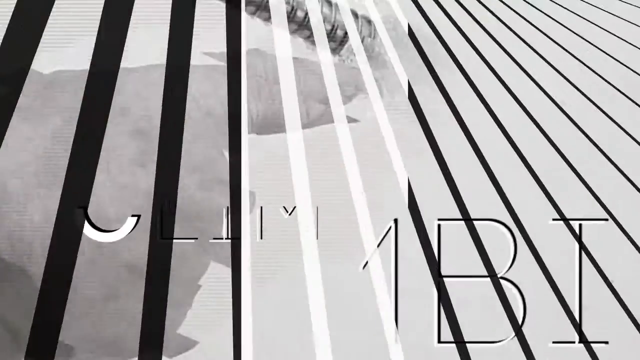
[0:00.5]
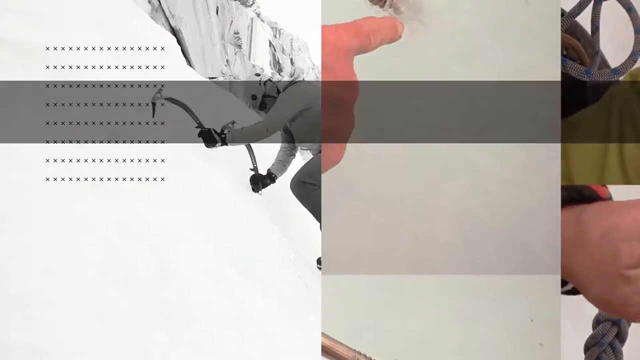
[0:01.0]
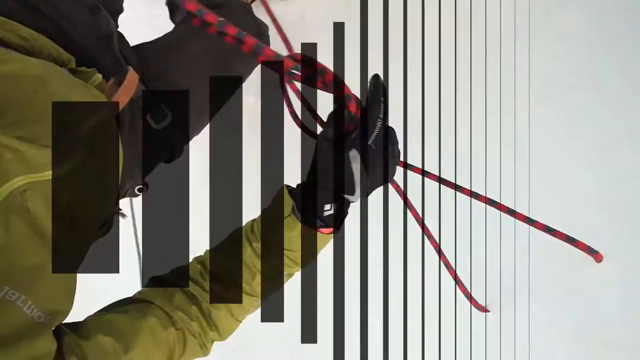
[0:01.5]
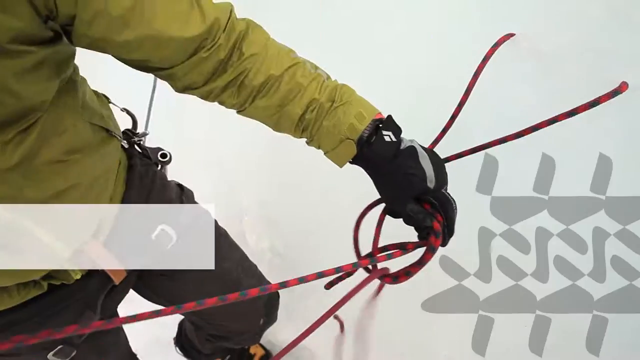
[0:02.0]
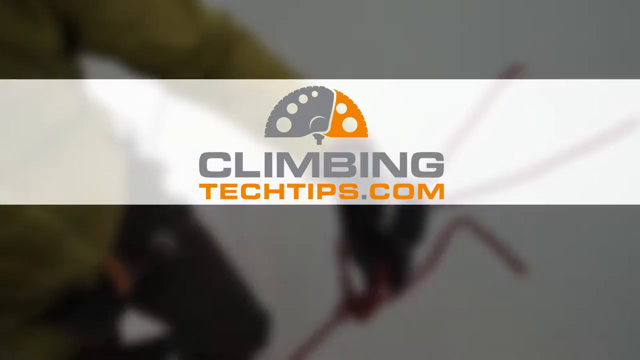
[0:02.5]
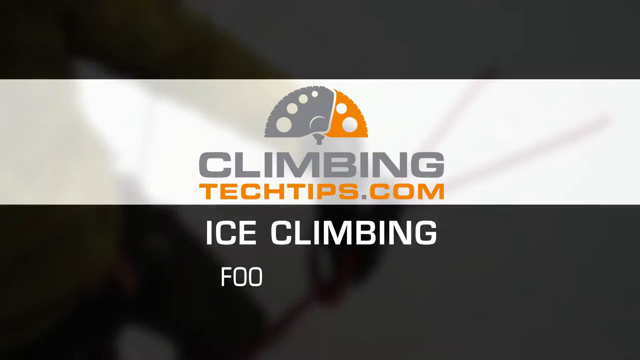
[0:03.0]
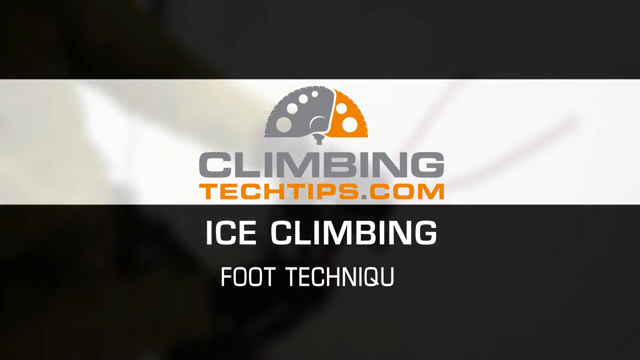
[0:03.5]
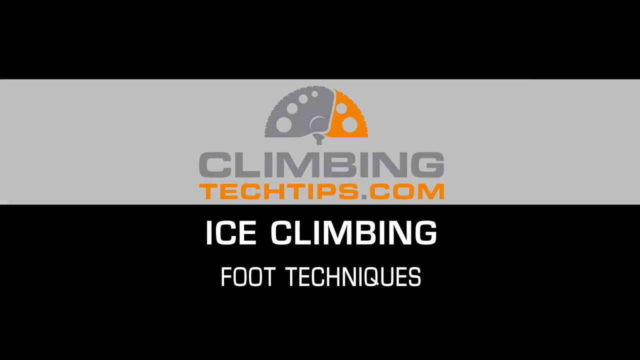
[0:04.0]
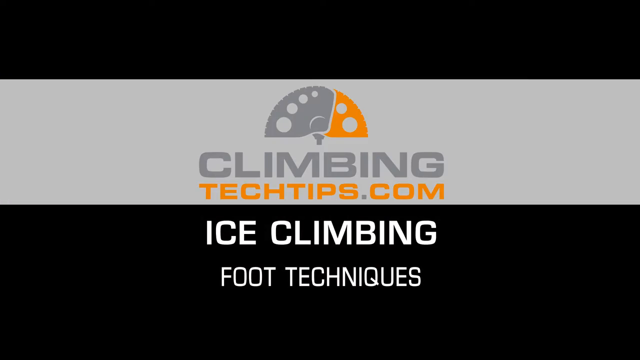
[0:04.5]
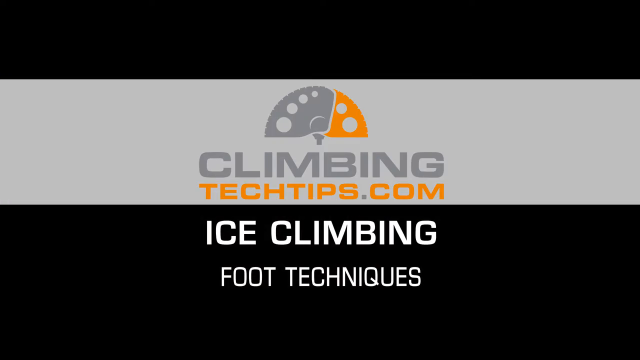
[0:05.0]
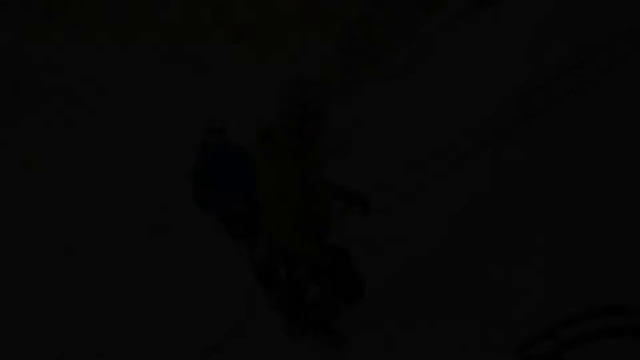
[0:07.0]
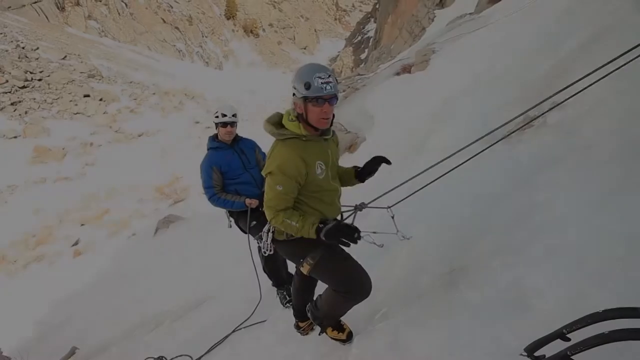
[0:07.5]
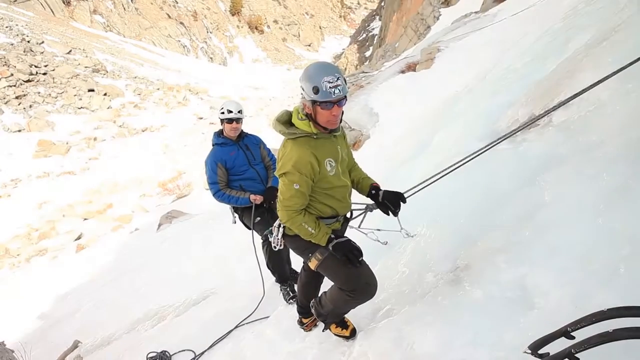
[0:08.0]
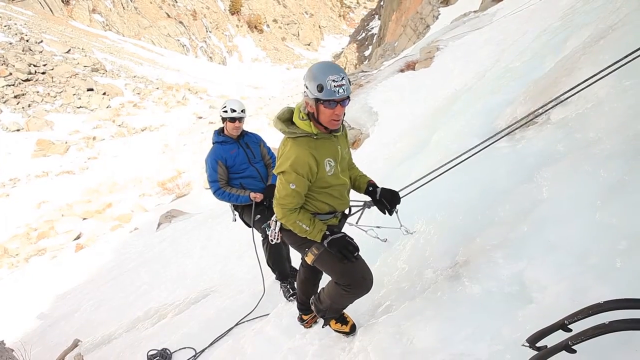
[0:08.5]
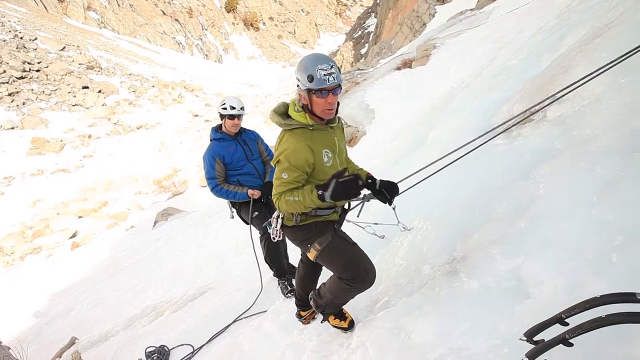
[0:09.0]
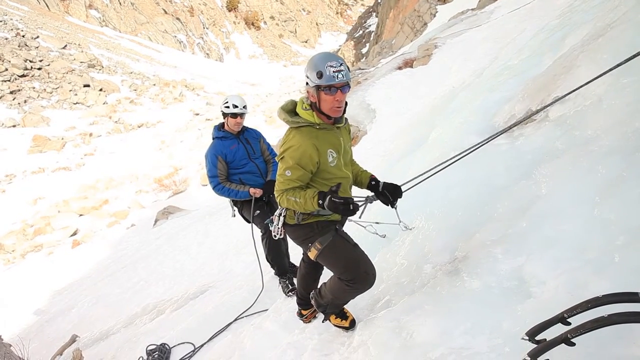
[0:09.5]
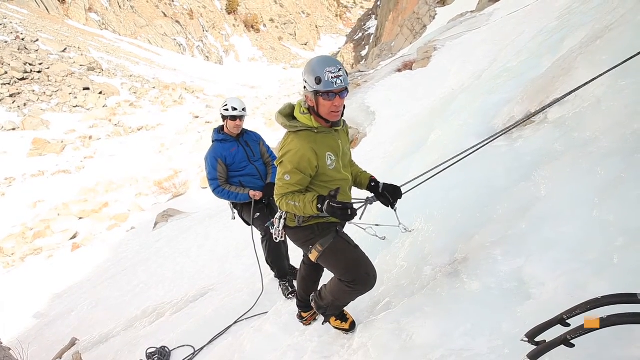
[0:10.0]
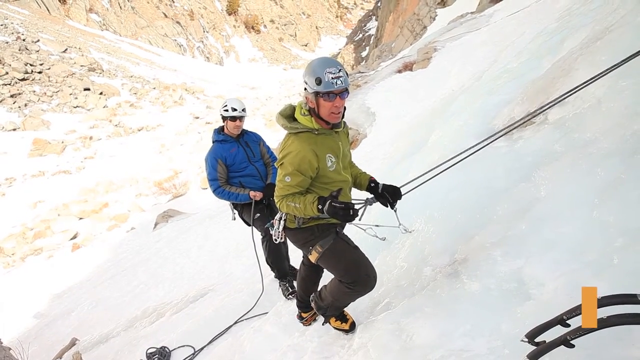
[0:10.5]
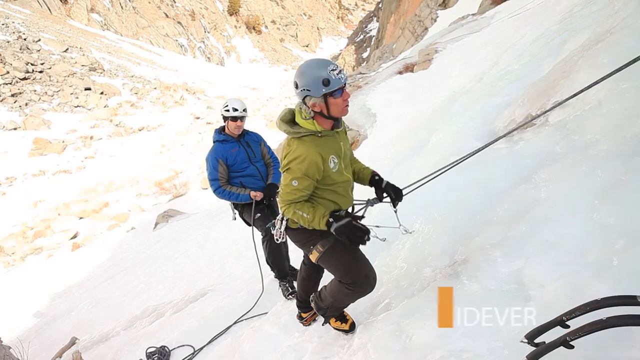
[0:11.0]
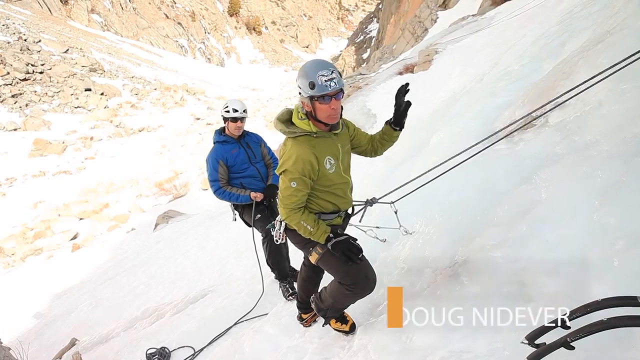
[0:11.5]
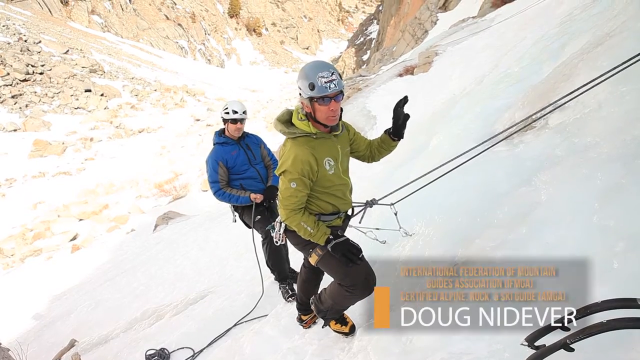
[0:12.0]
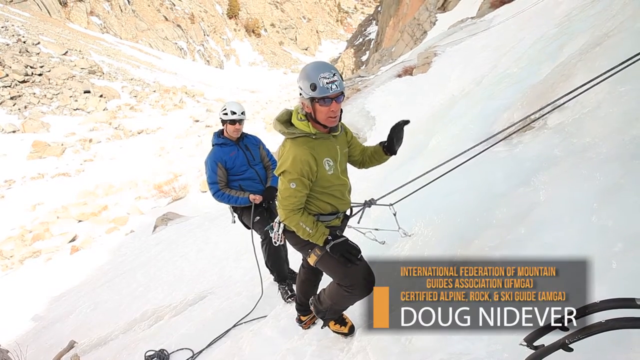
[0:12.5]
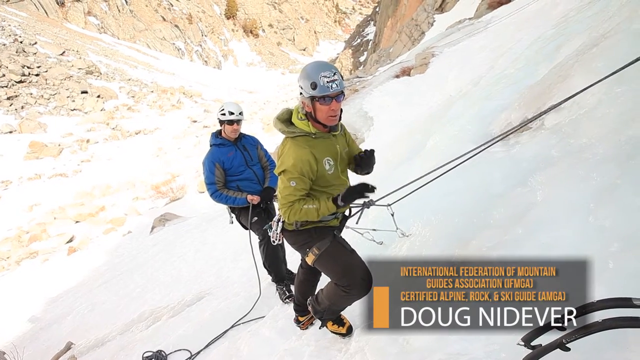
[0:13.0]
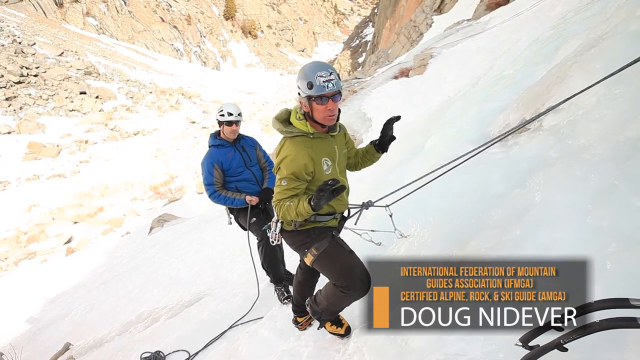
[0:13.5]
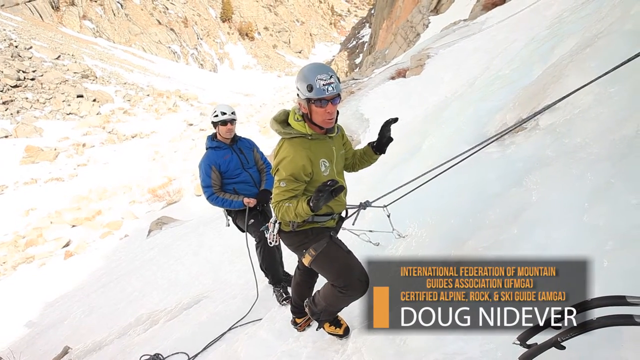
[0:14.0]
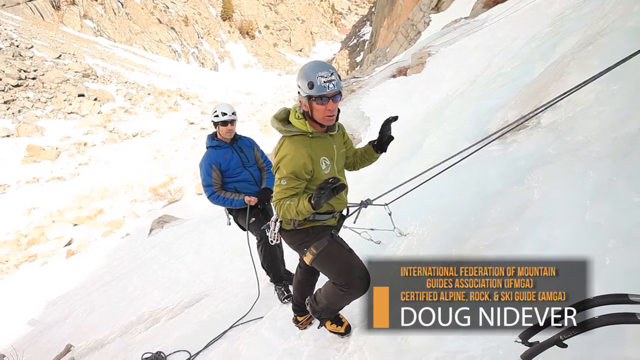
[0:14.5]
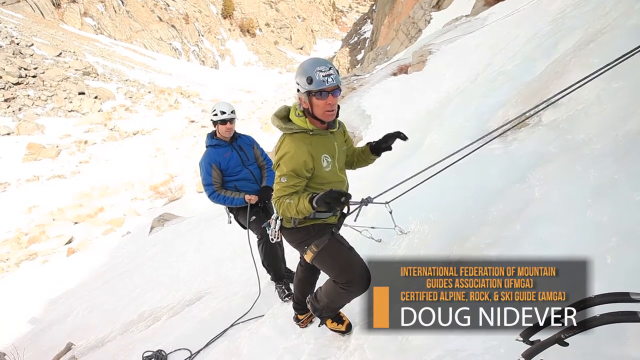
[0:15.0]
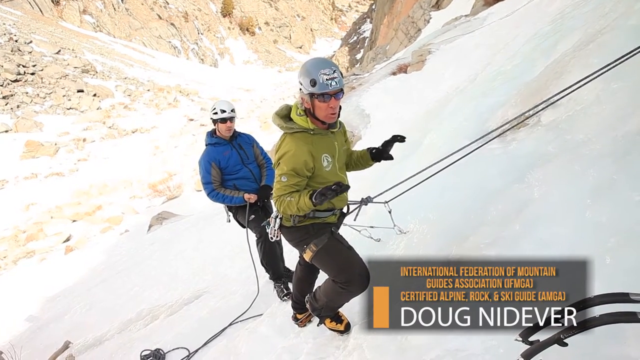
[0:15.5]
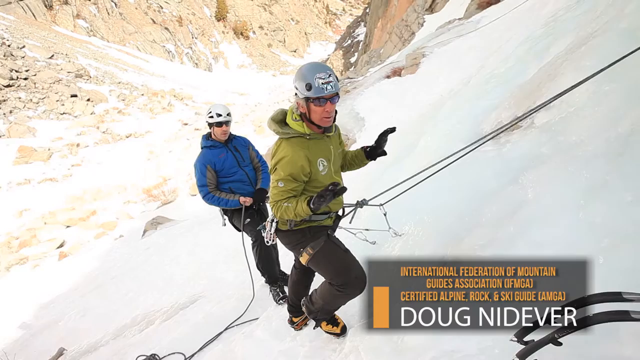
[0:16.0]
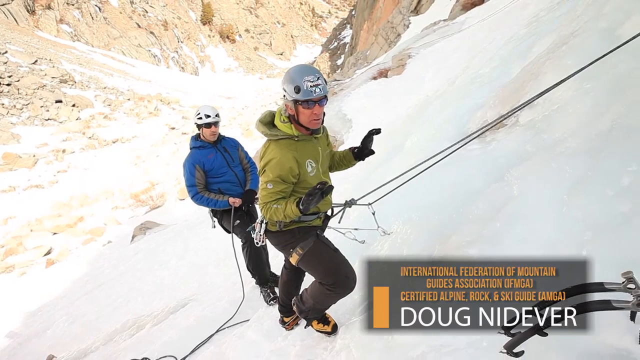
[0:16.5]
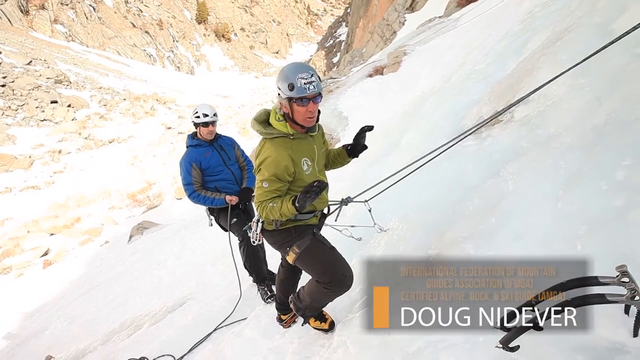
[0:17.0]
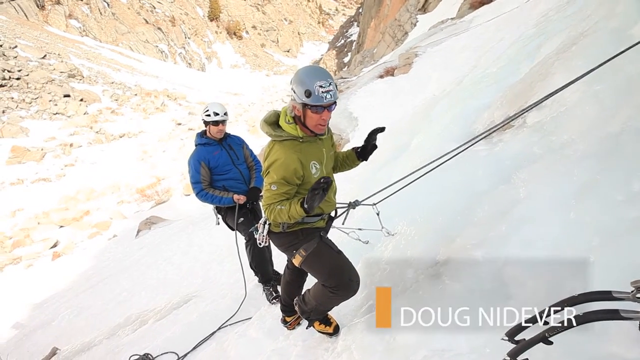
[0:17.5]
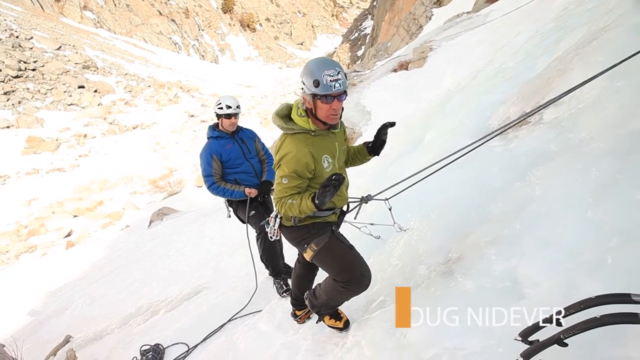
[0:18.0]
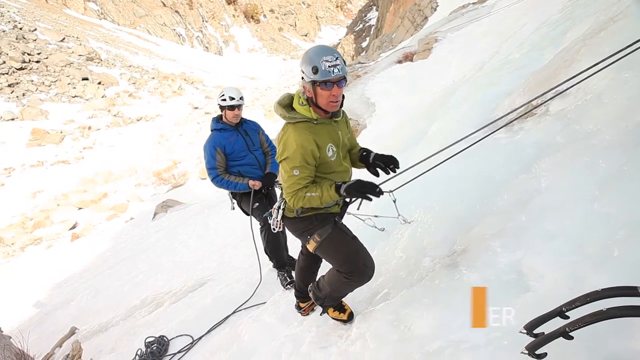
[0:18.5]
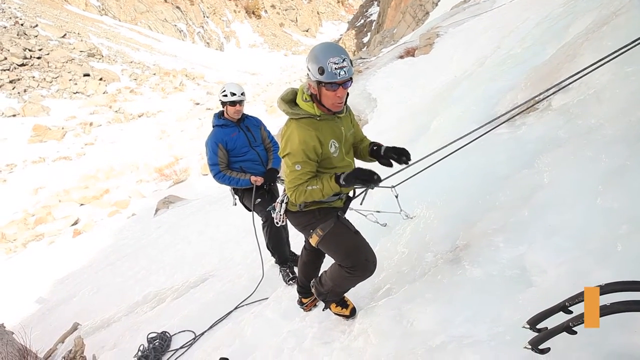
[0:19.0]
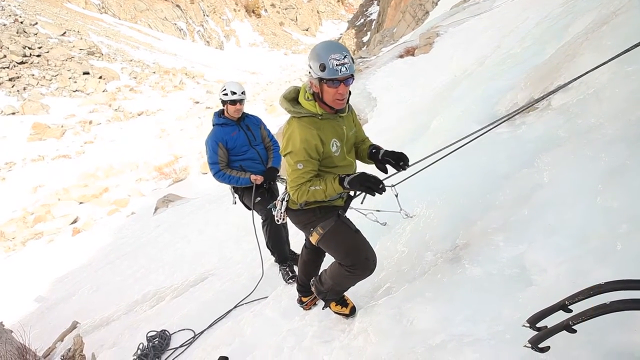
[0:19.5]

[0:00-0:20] The video opens by transitioning through different scenes of people climbing on the sides of hills. A logo then appears on the screen that reads "Climbing Tech Tips.com, Ice Climbing Foot Techniques." Next, people are shown walking up the side of a mountain with ropes tied around their waists, the ropes running up to the right. One person is kind of leaning forward while climbing the steep incline. A man stands on the side of the mountain, talking to the camera and moving his hands around in front of his body as he speaks. He wears a green jacket and a gray helmet. Another man stands behind him in a blue jacket and a white helmet. Ropes are tied to the man in the green jacket; he kind of touches the ropes while also gesturing expressively, moving his hands from side to side and up and down and kind of pointing at the hill and the ropes.